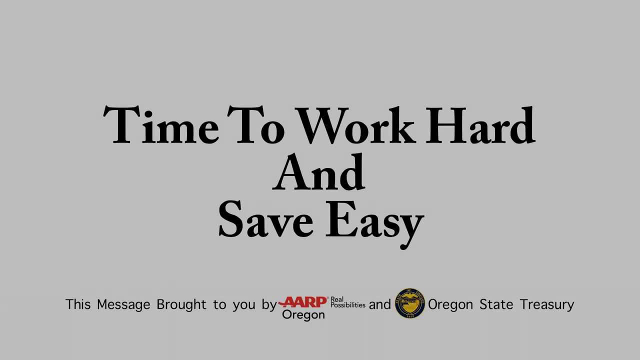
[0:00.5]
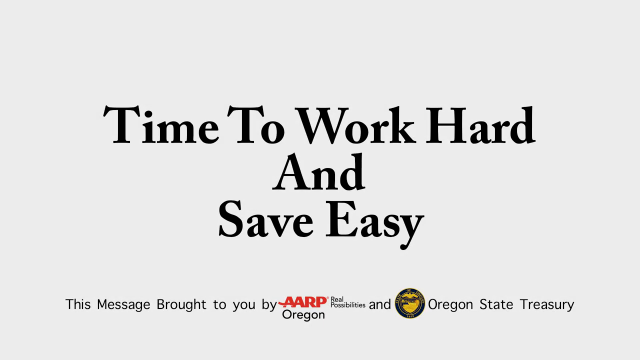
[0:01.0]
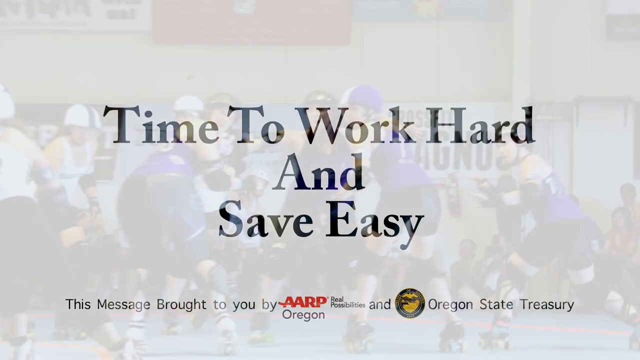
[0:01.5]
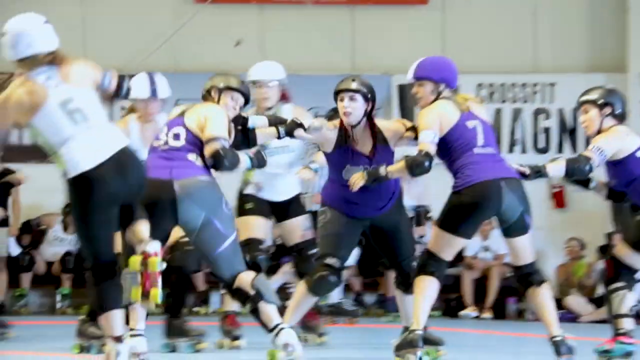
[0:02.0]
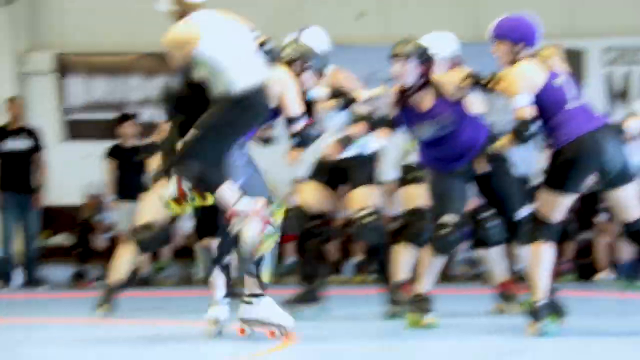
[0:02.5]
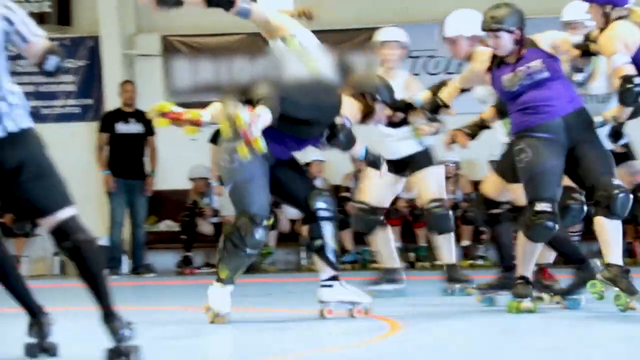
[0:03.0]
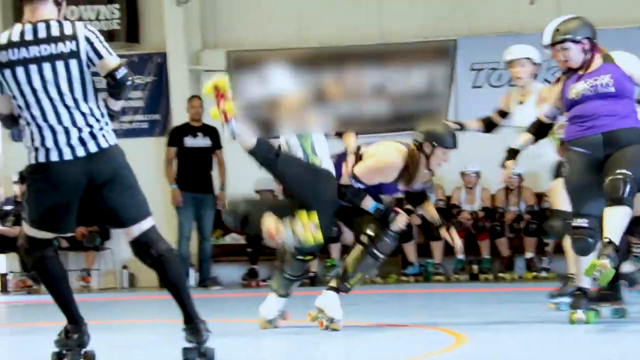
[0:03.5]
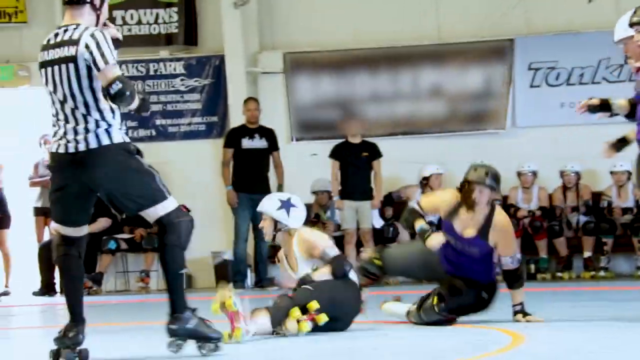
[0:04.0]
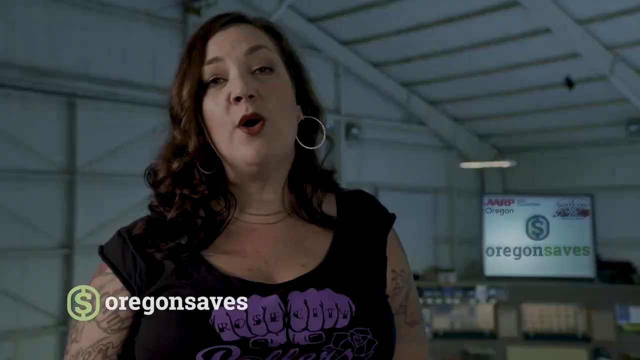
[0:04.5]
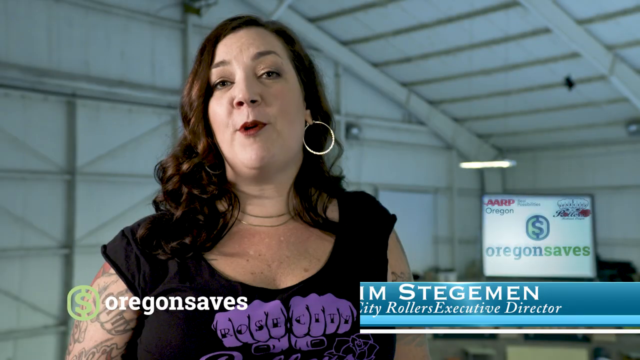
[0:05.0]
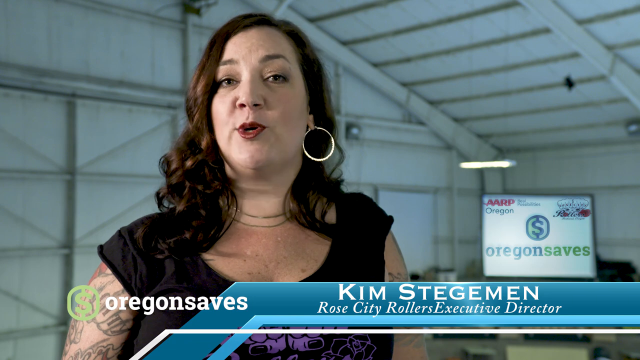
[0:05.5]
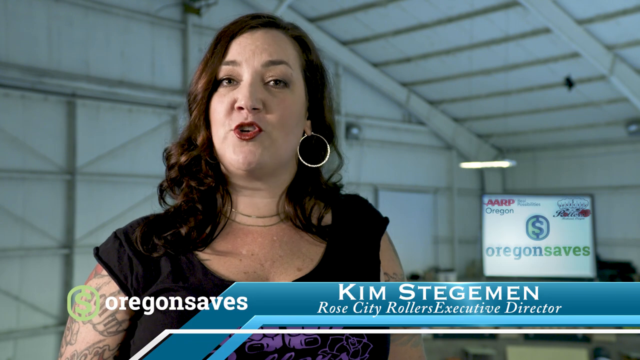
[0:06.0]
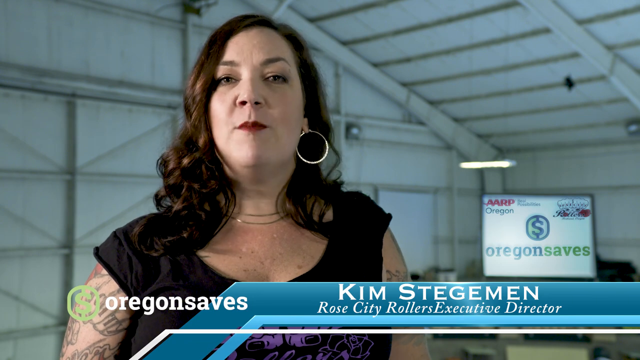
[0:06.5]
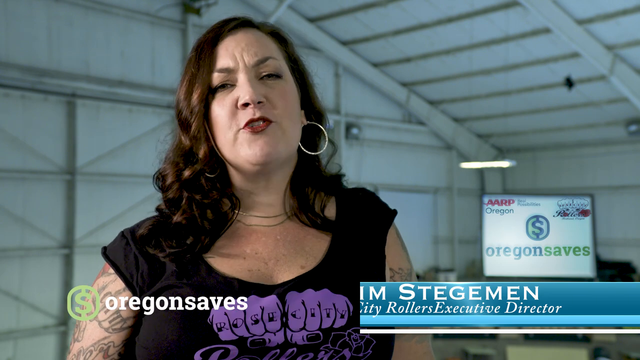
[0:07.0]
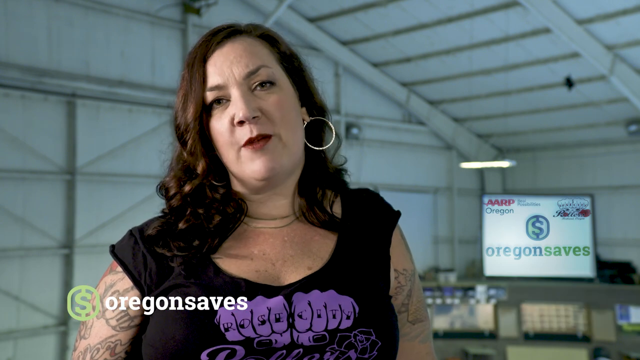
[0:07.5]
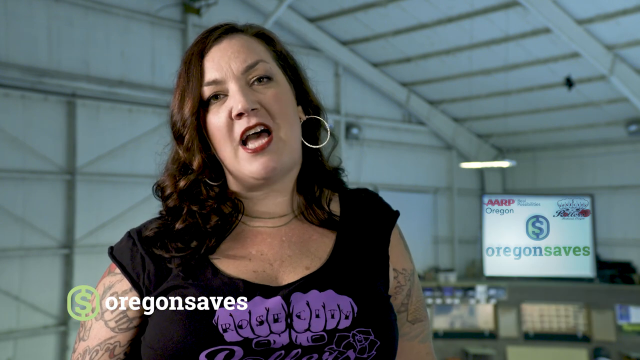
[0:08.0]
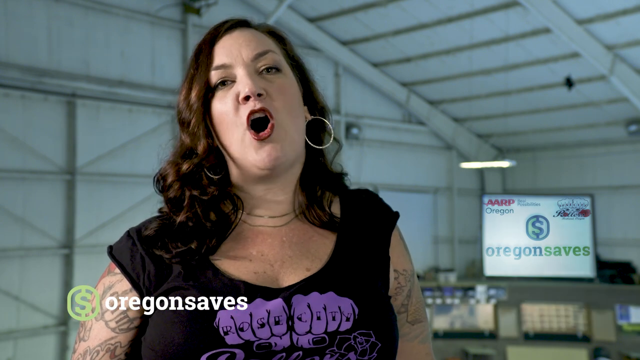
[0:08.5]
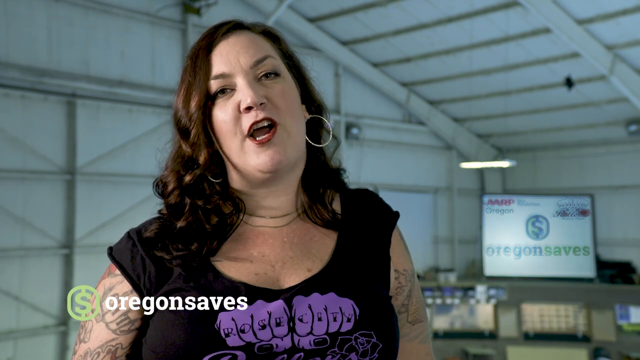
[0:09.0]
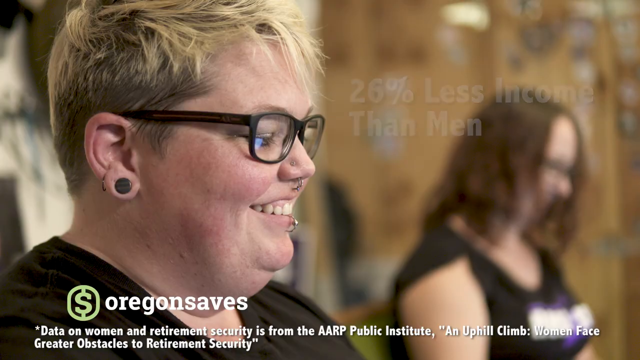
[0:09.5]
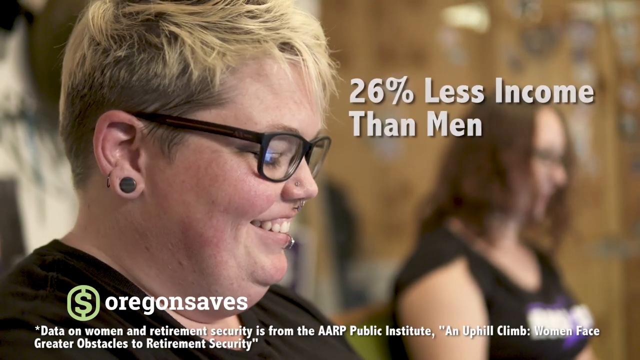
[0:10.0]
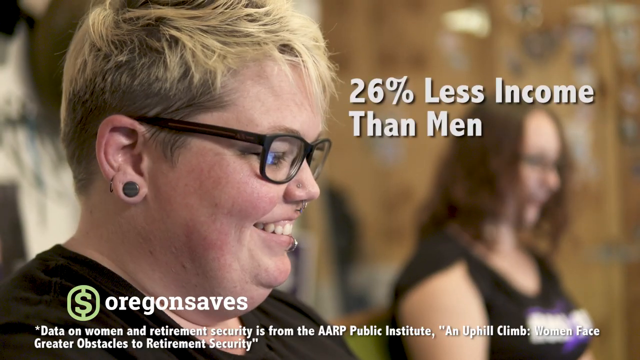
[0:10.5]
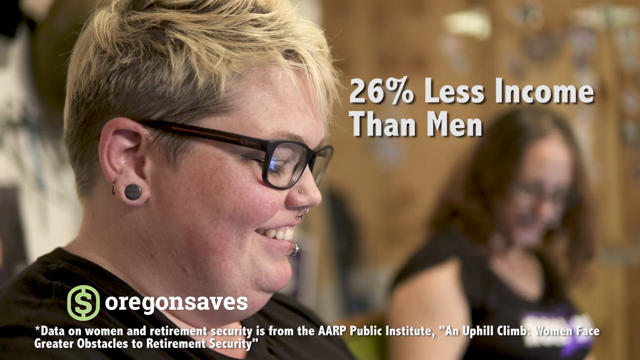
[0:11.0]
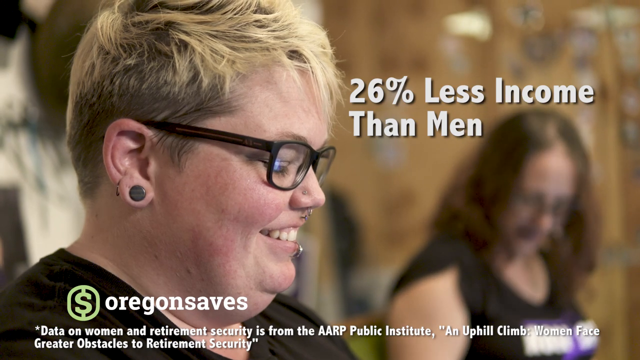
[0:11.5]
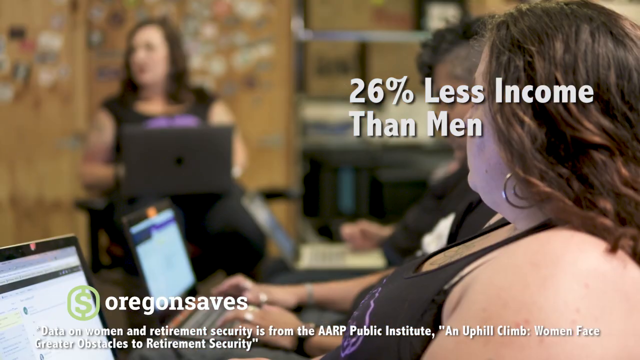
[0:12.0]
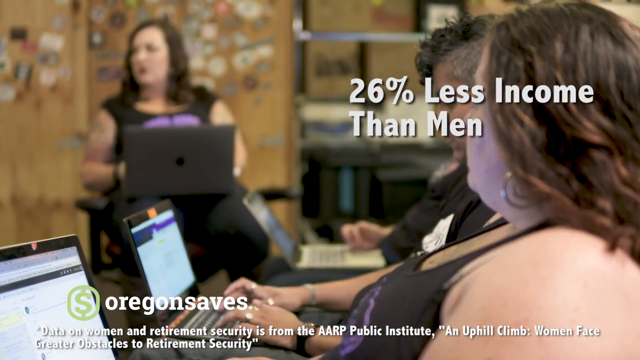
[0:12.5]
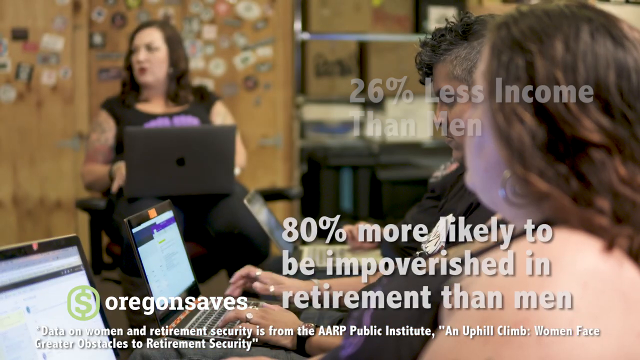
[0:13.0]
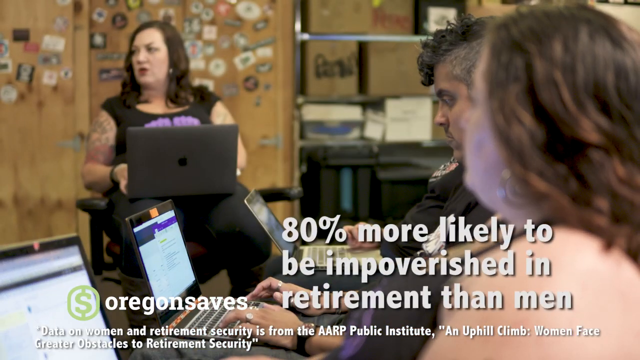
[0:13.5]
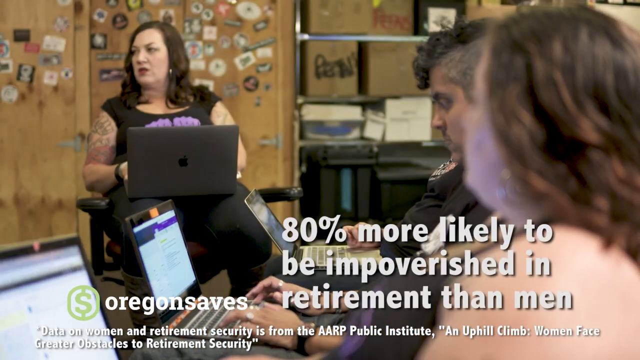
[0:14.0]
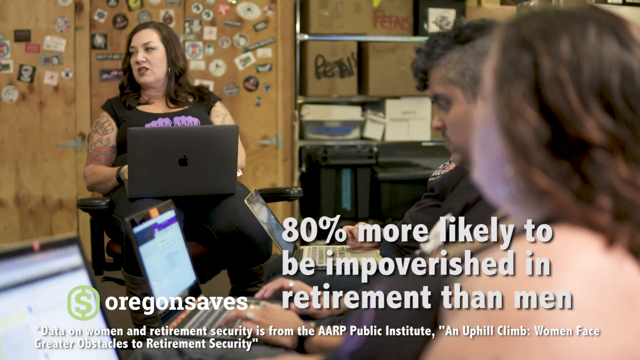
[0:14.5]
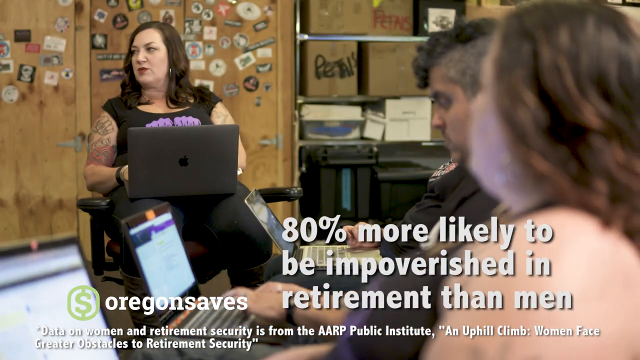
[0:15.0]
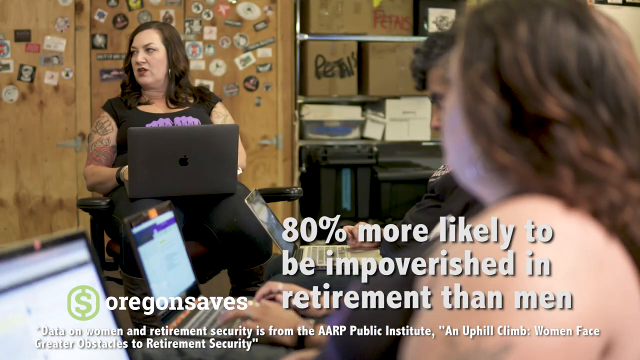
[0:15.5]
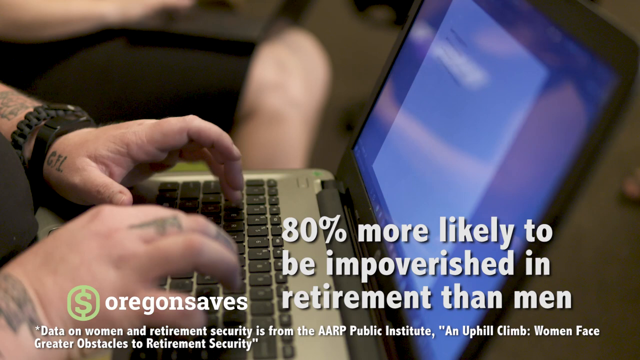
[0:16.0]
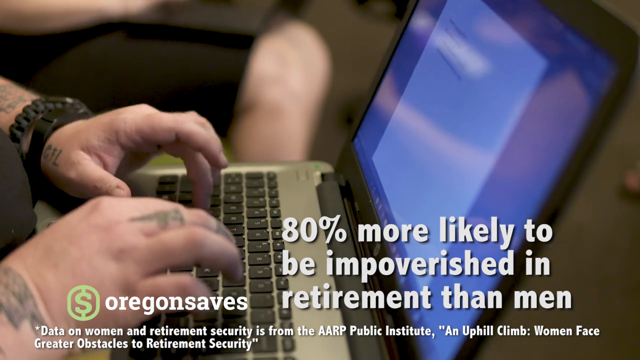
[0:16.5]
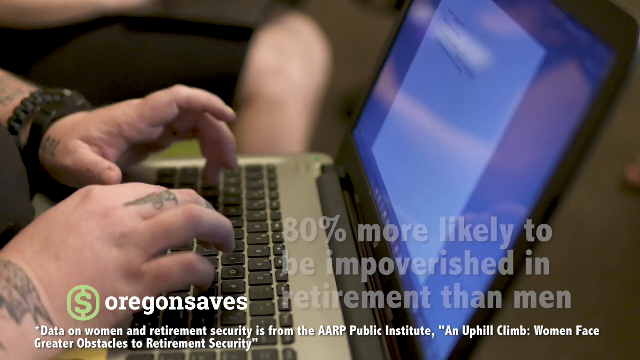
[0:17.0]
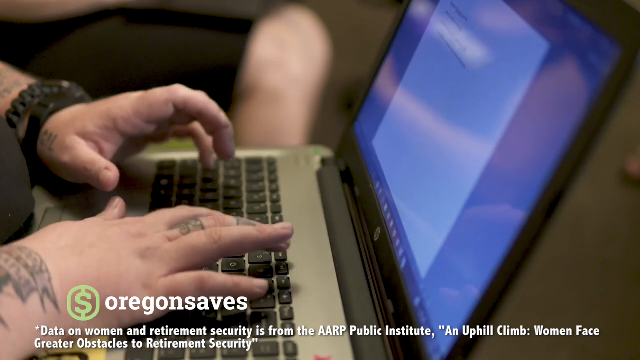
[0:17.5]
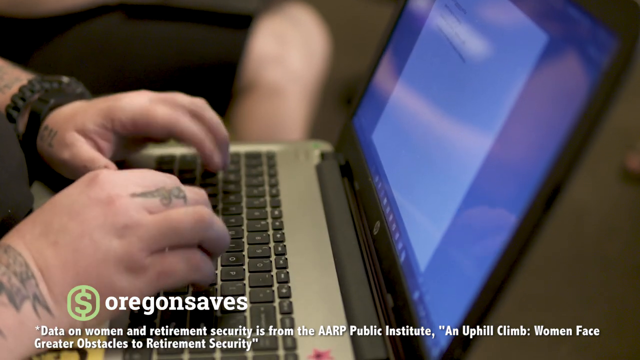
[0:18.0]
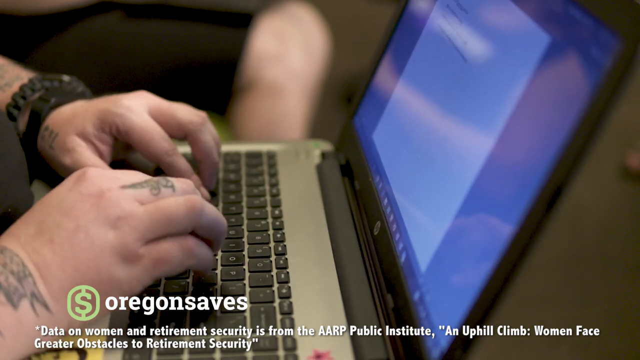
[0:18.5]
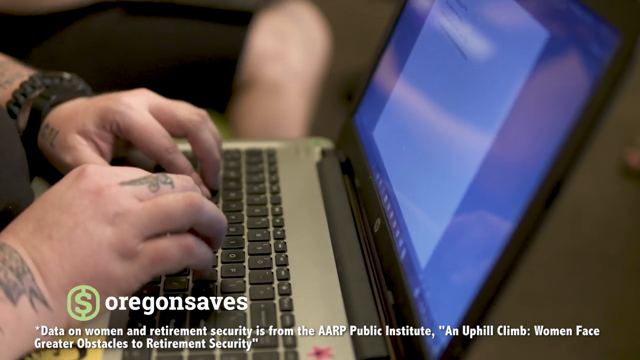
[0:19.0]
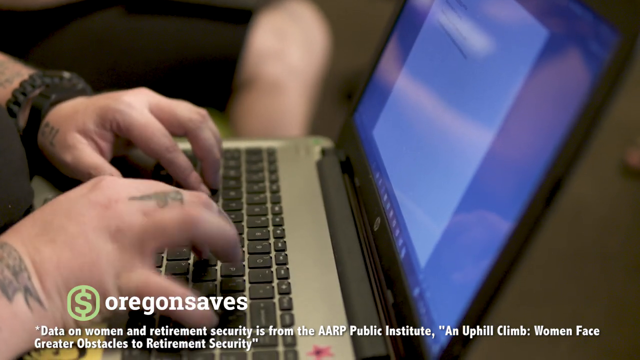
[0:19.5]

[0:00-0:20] A white background shows the words "time to work hard and save easy" in black in the middle, and below them "this message brought to you by AARP Oregon, Real Possibilities, and Oregon State Treasury," with both logos shown. The scene transitions to women roller skating and tackling into each other: a large group of women, all in roller skating gear and helmets, with some watching in the background and a referee present. Next, a woman in a black shirt talks toward the camera, her name shown as "Kim Stegeman." The video then cuts to multiple women and what appears to be one man on laptops; they all appear to be heavyset and are typing. The shot ends with one of the people in the group laughing.